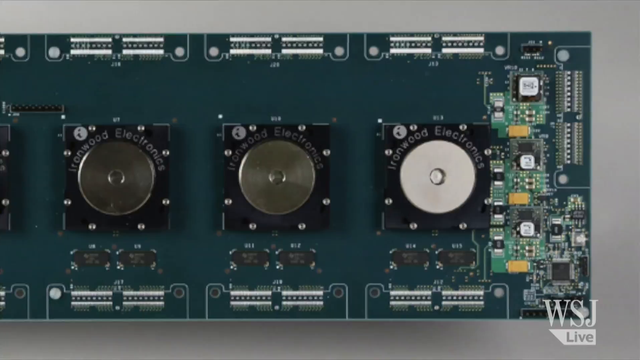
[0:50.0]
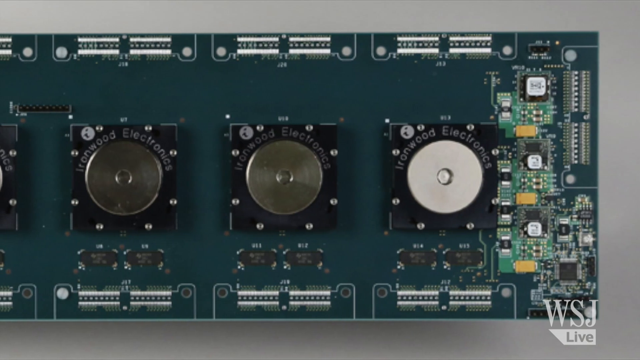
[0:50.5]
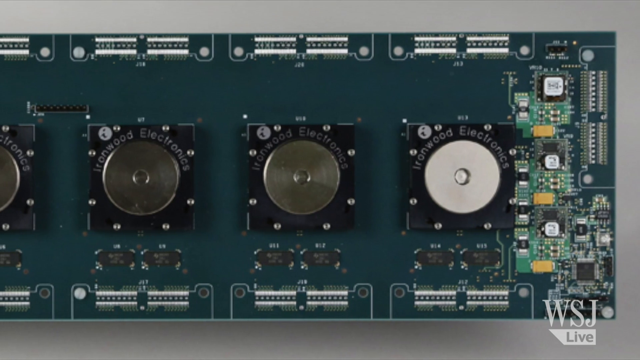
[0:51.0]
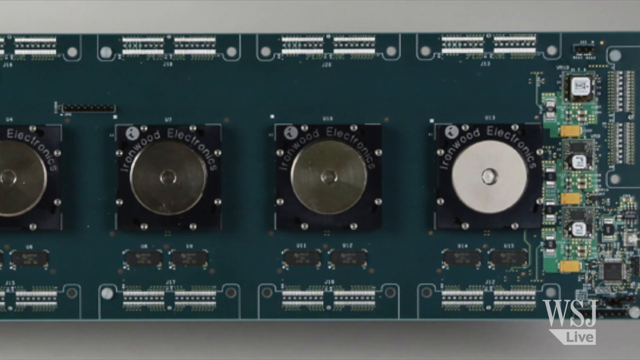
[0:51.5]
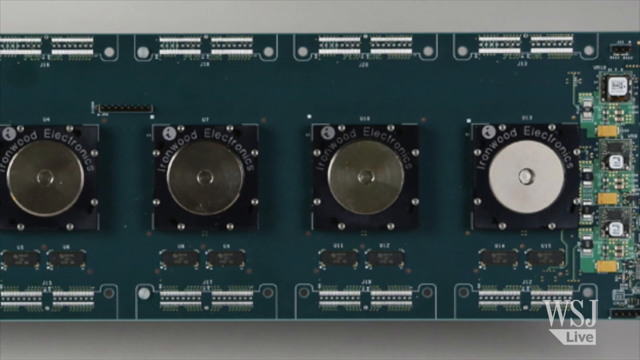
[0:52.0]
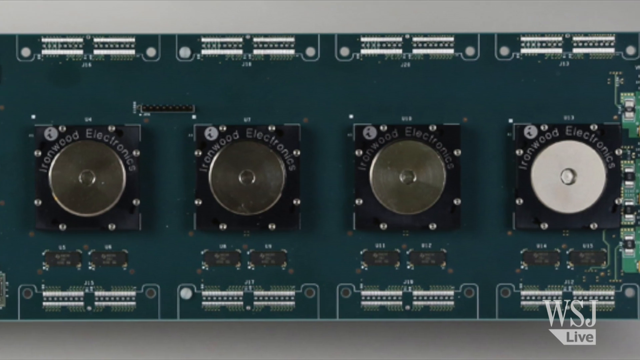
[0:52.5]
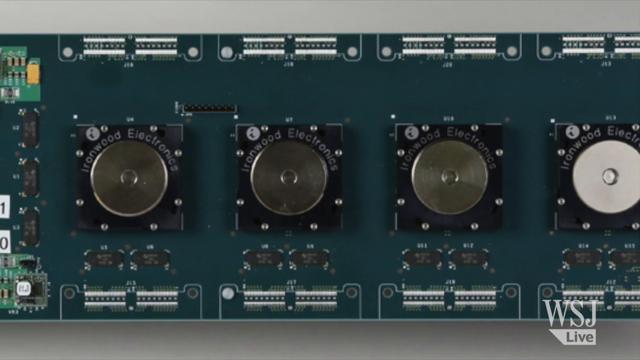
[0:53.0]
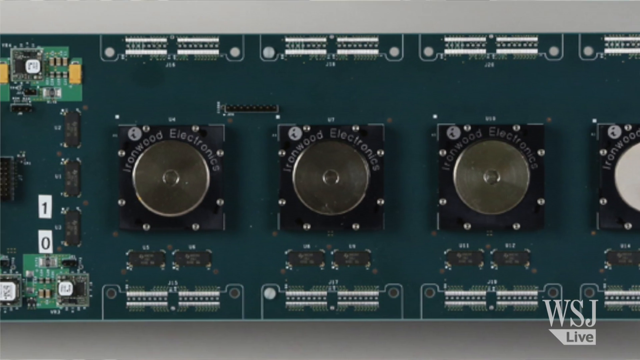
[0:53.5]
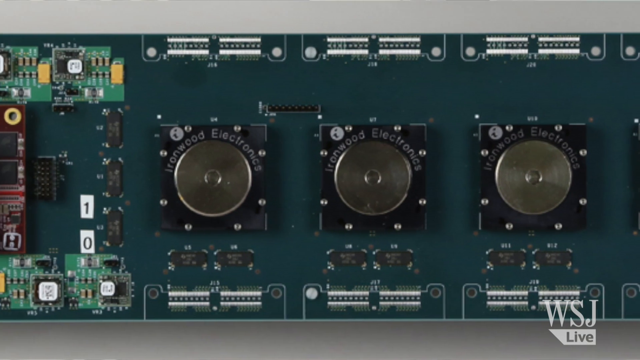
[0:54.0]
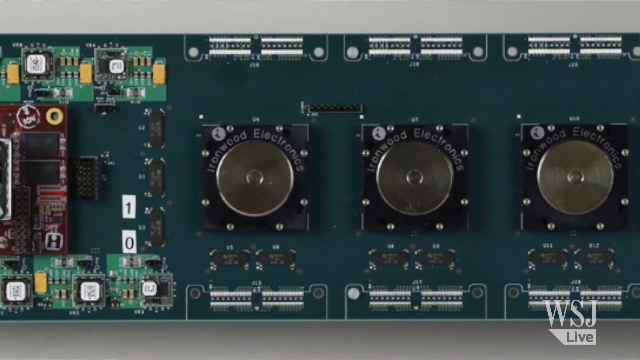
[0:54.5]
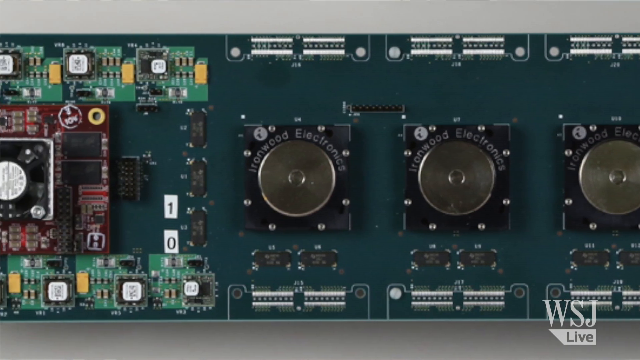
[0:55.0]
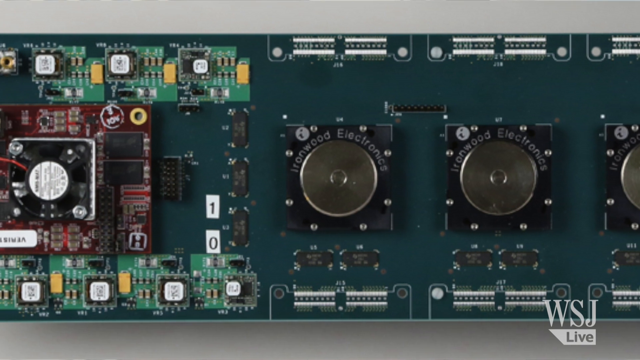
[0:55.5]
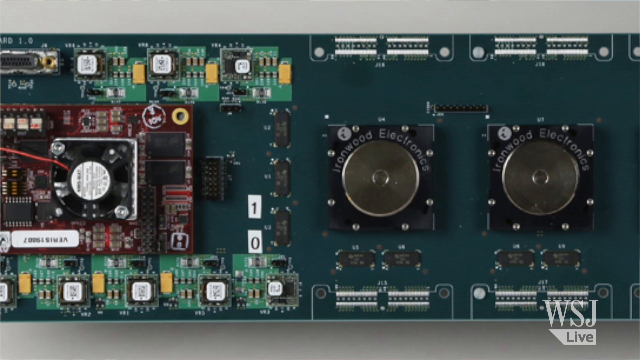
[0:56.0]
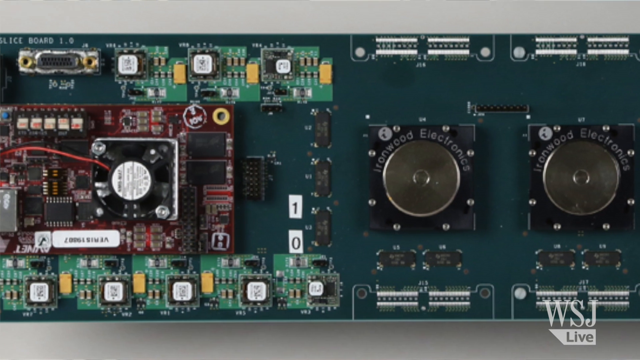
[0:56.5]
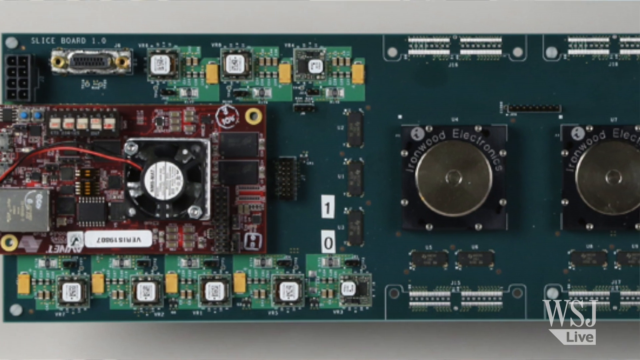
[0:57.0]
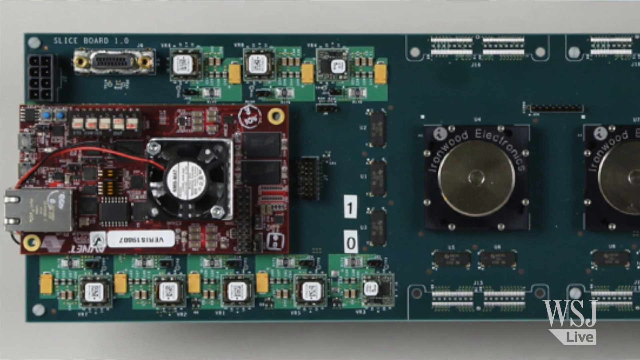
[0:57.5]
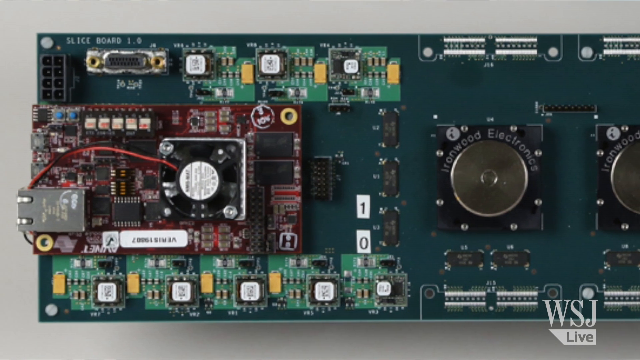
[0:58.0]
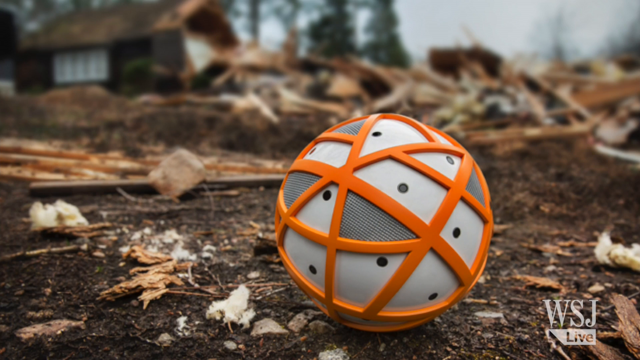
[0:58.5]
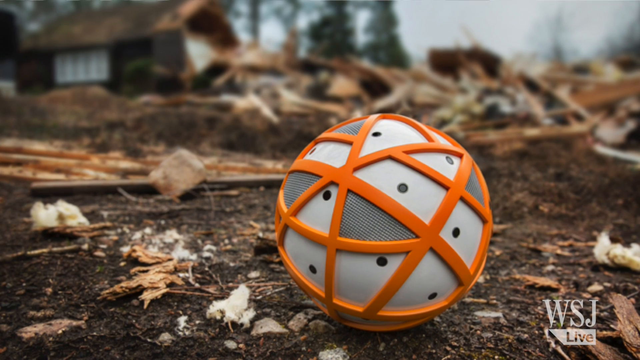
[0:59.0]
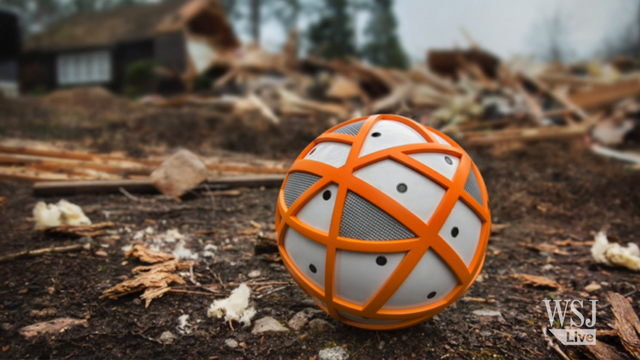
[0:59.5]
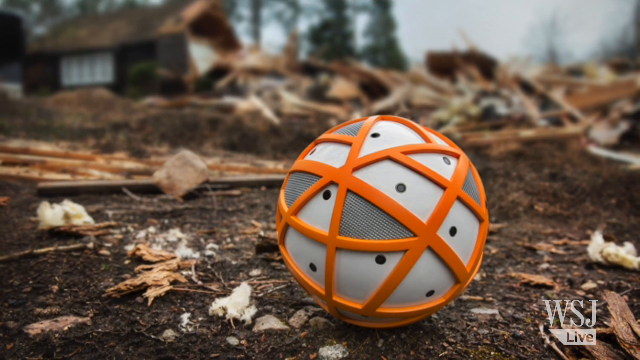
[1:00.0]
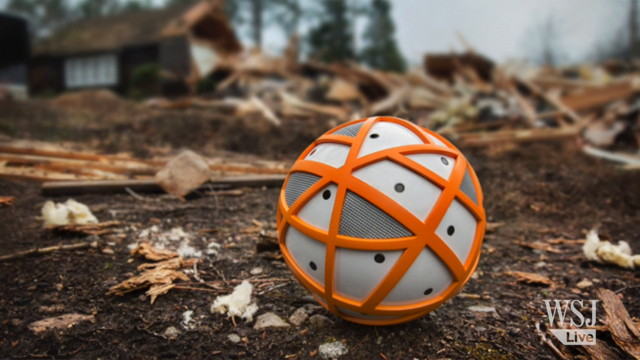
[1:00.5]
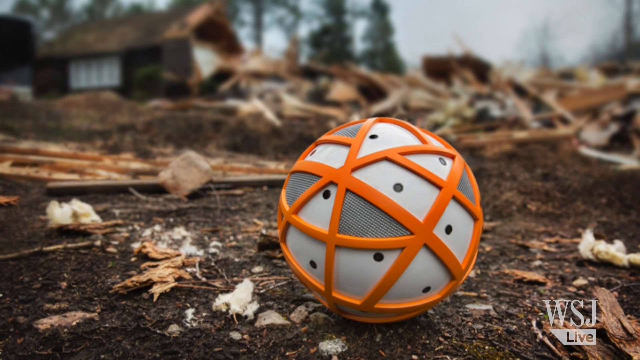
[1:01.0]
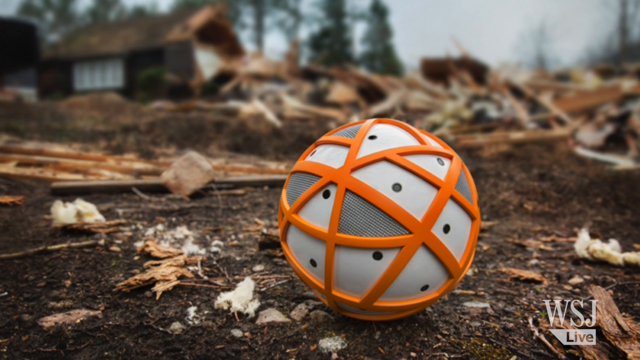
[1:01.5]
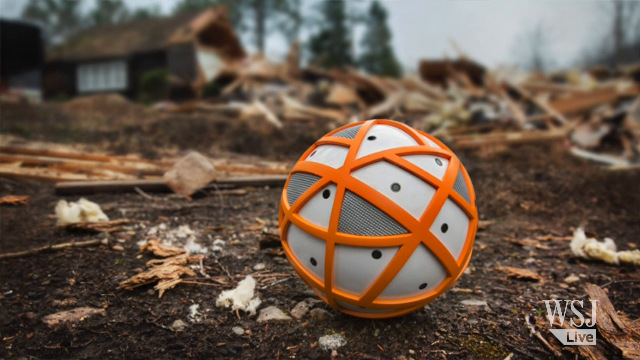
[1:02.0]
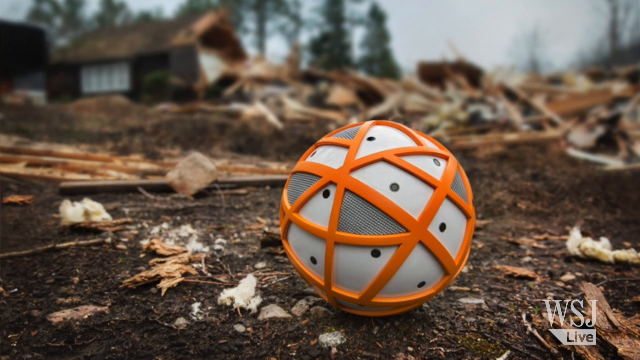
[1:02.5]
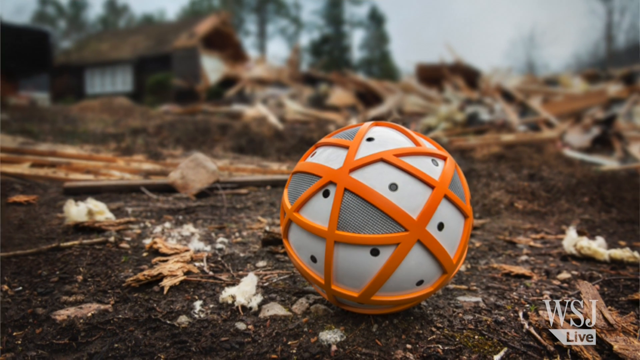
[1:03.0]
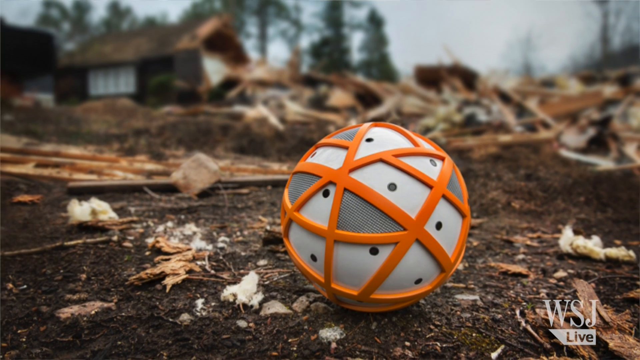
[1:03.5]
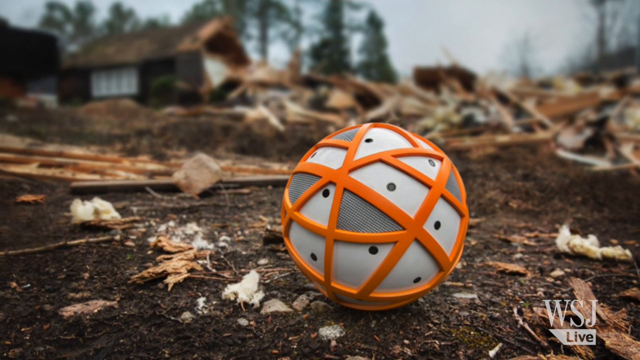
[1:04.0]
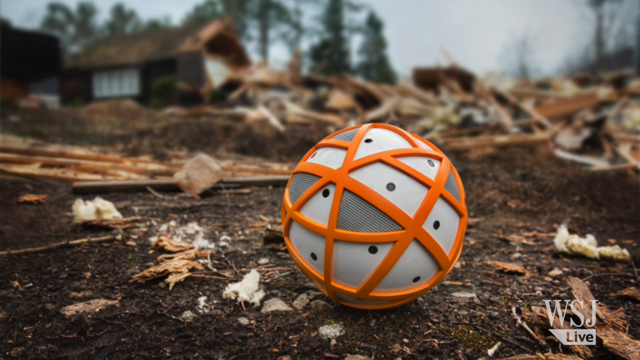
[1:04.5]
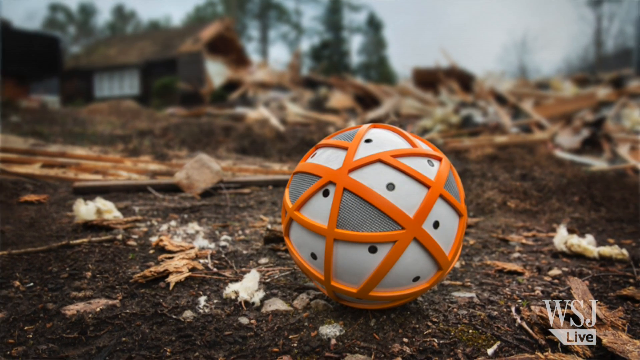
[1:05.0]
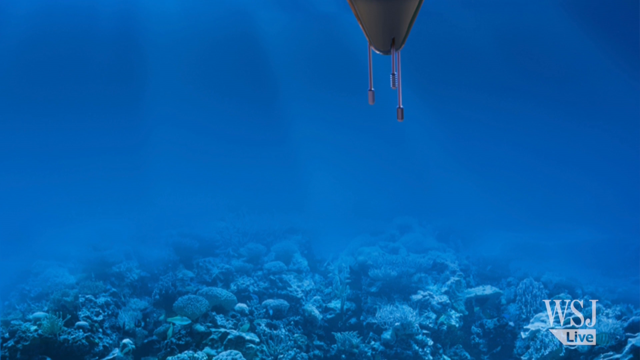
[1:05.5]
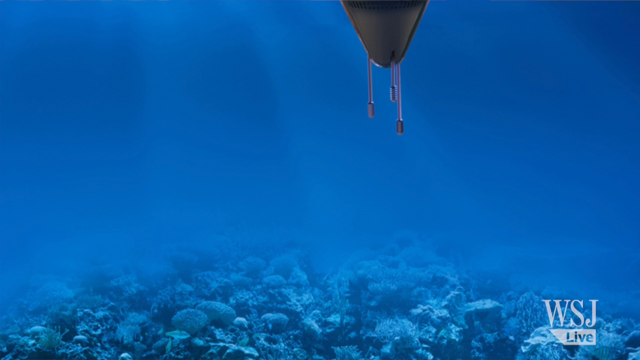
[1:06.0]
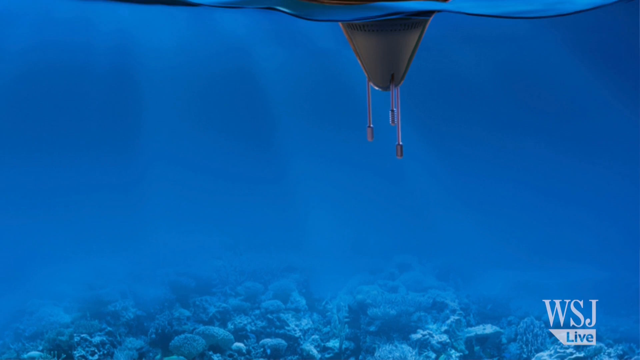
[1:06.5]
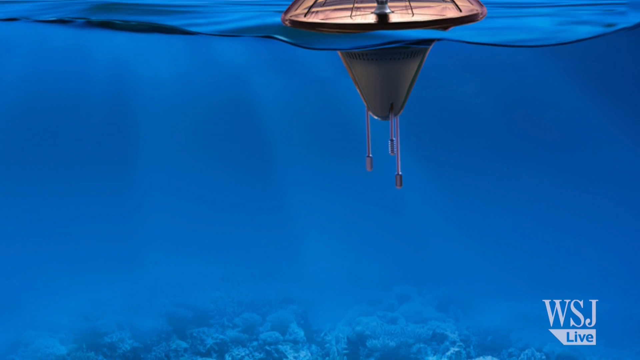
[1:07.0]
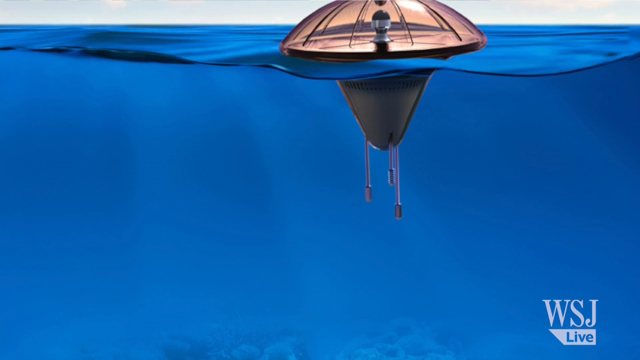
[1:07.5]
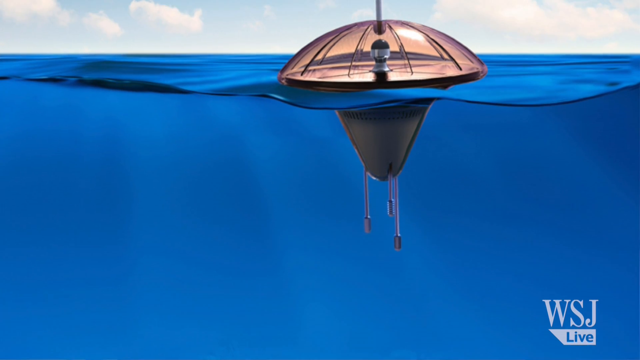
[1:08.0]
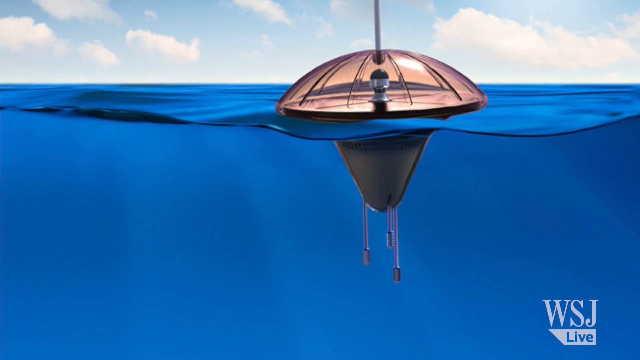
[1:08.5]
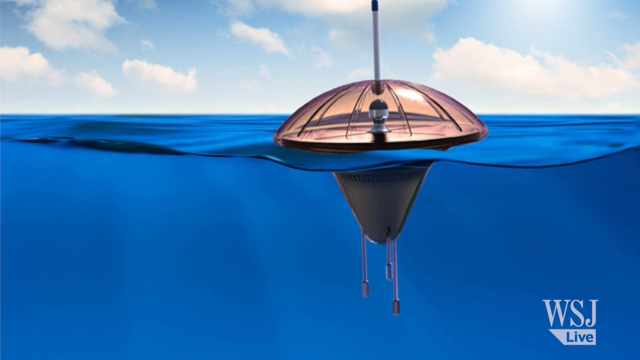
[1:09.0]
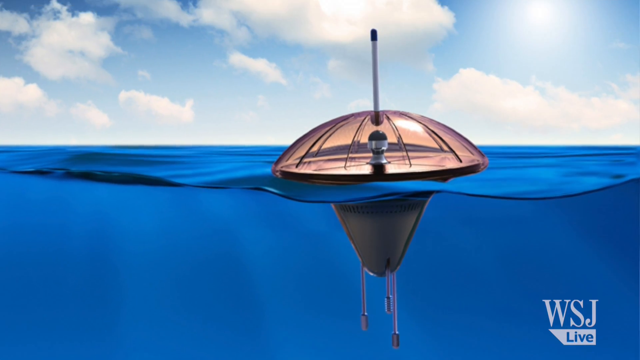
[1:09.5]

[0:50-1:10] A white ball with many paws and orange rubbers around it is shown. There appears to be a river with something inside it that looks like an animal but also looks like part of an alien thing. In a field there are woods, and the grass is brown. There seem to be two aliens in the water, one half inside the water and half outside it. The chips have four plates of round things inside them, made of copper and metal.